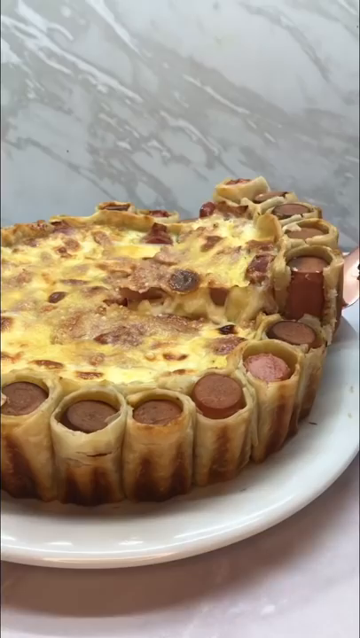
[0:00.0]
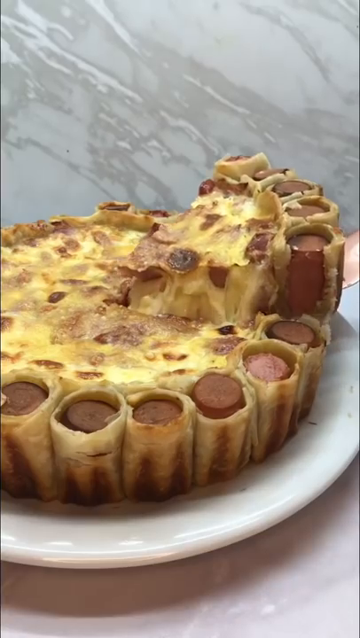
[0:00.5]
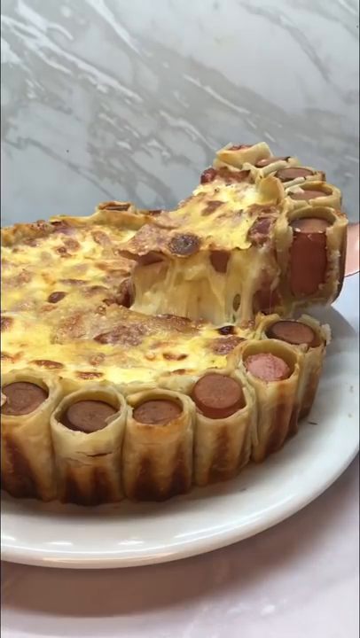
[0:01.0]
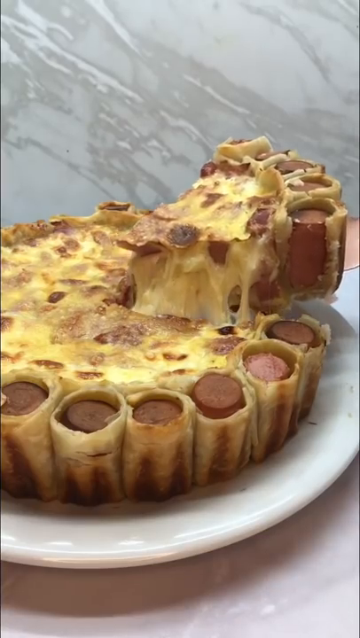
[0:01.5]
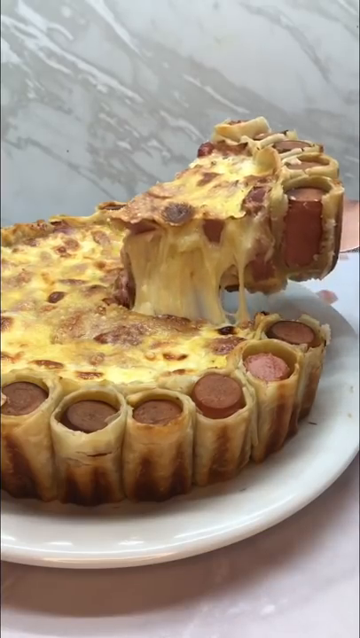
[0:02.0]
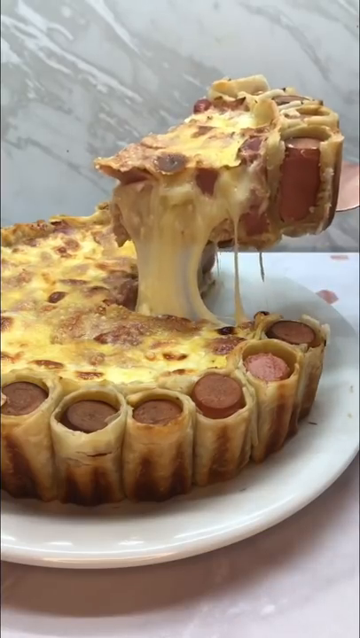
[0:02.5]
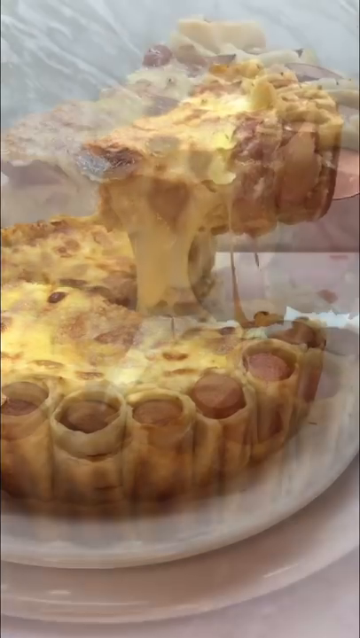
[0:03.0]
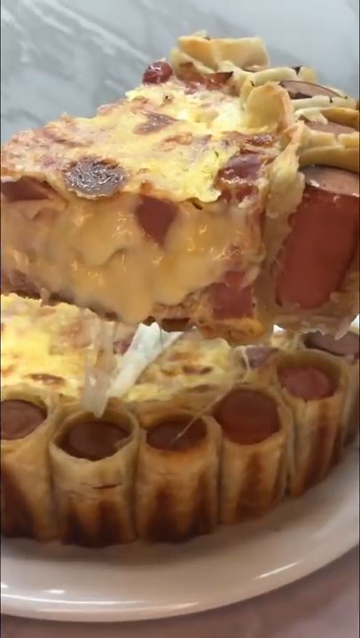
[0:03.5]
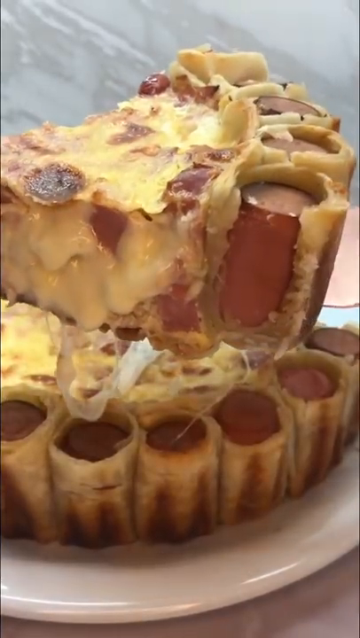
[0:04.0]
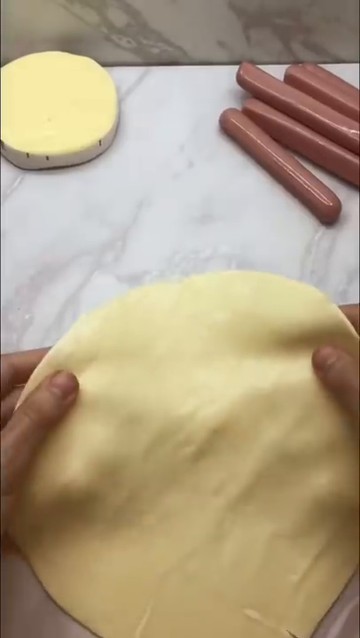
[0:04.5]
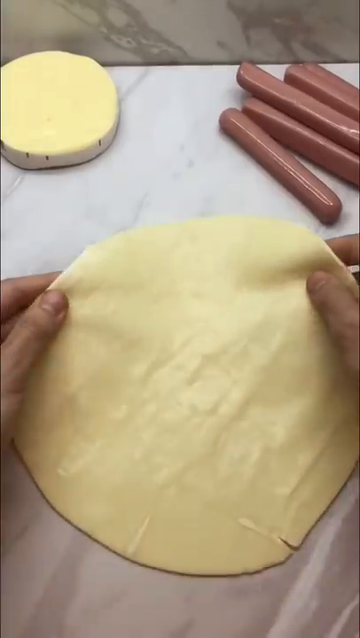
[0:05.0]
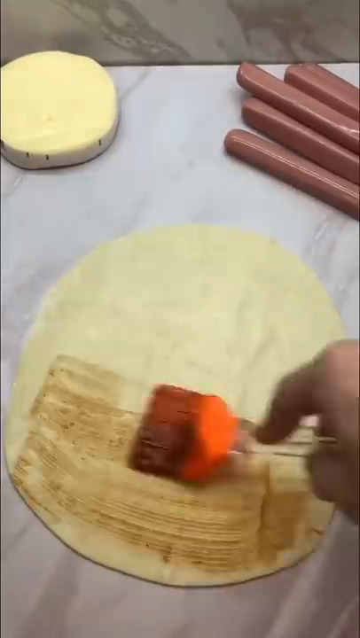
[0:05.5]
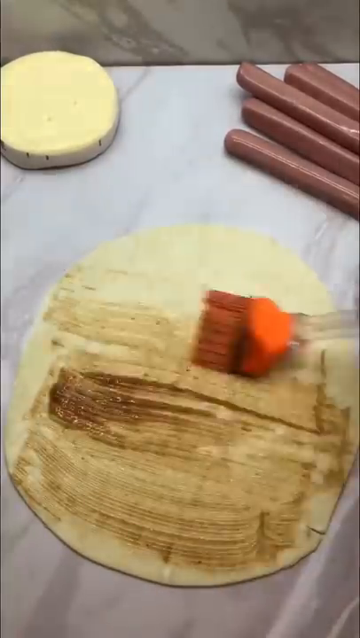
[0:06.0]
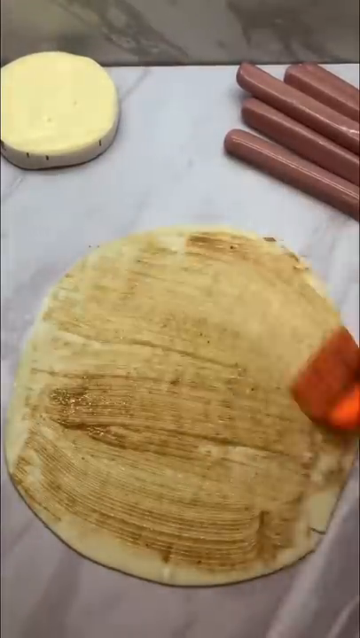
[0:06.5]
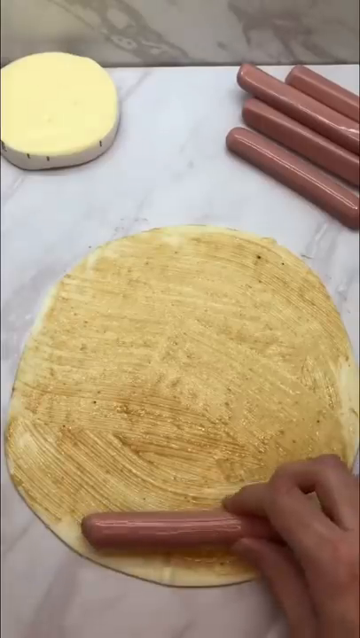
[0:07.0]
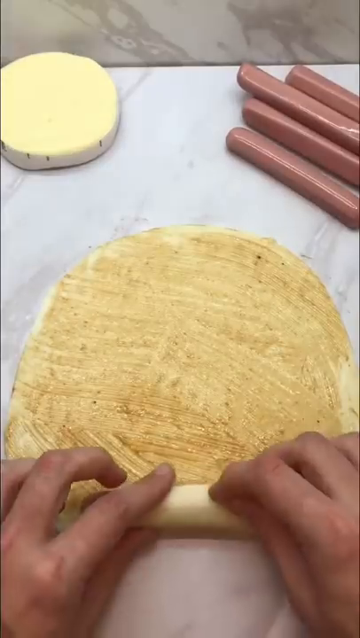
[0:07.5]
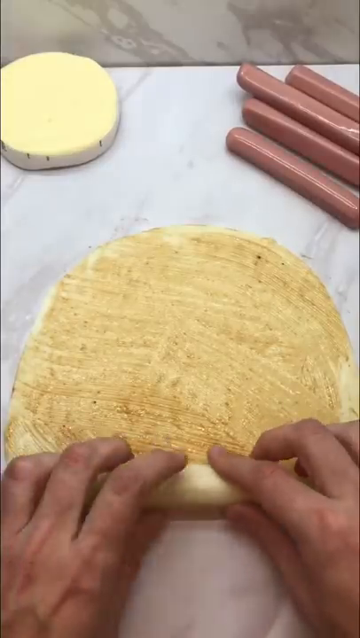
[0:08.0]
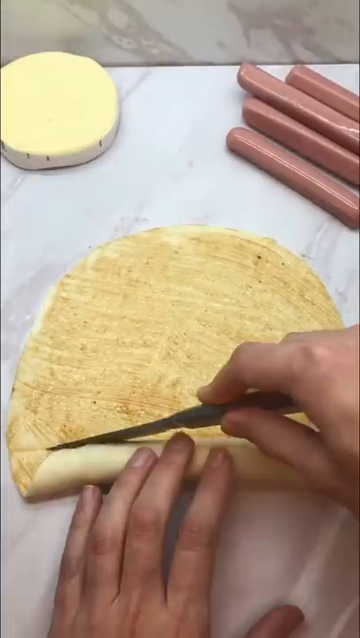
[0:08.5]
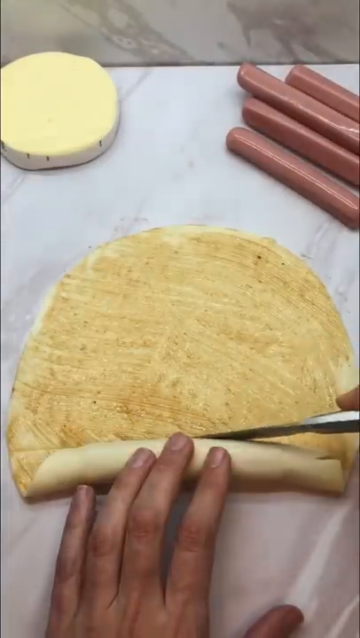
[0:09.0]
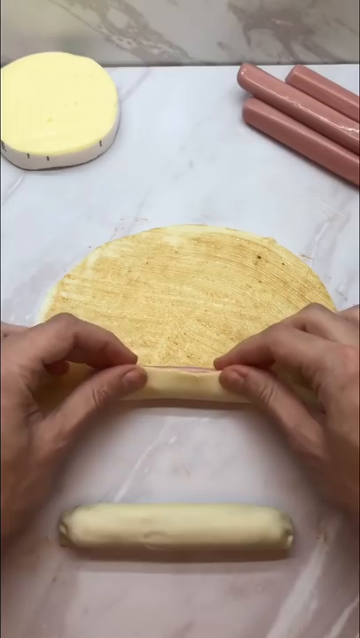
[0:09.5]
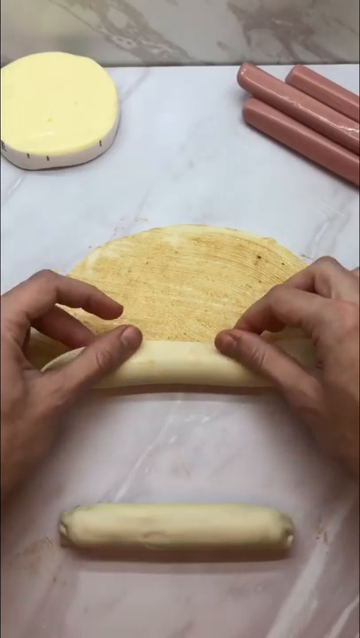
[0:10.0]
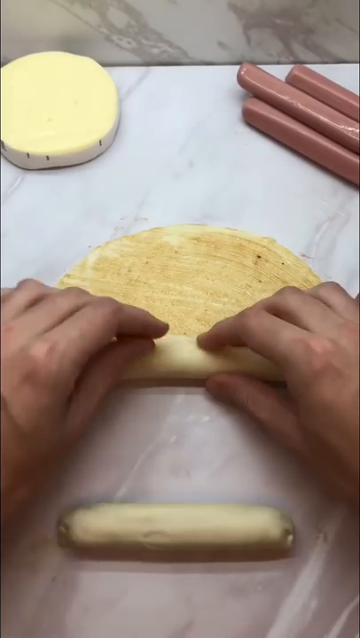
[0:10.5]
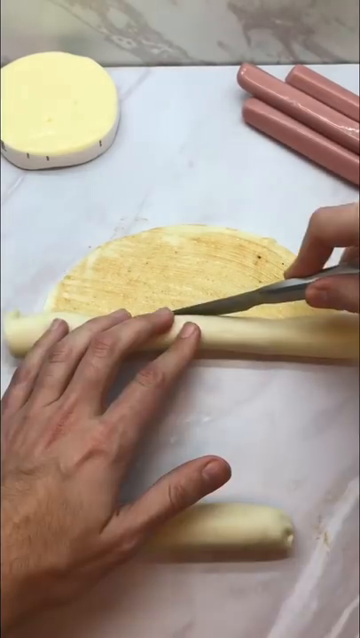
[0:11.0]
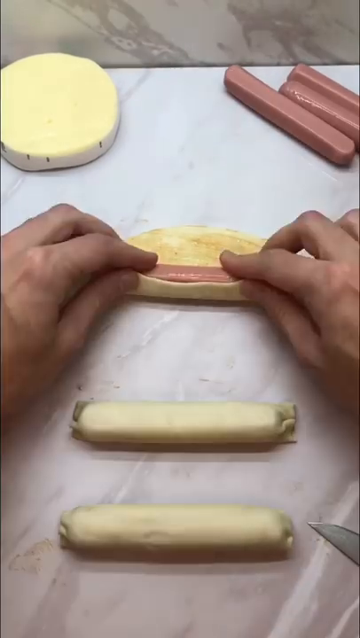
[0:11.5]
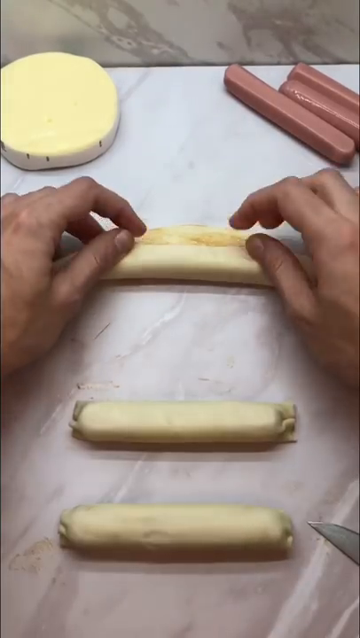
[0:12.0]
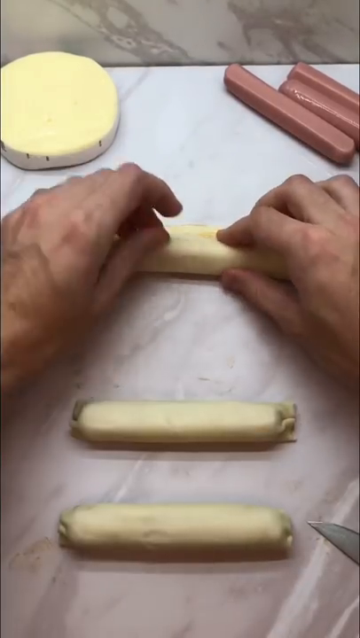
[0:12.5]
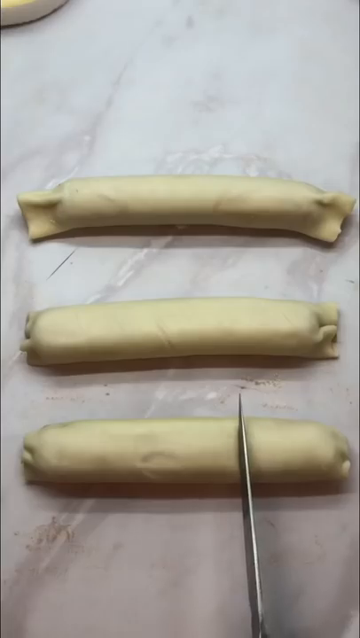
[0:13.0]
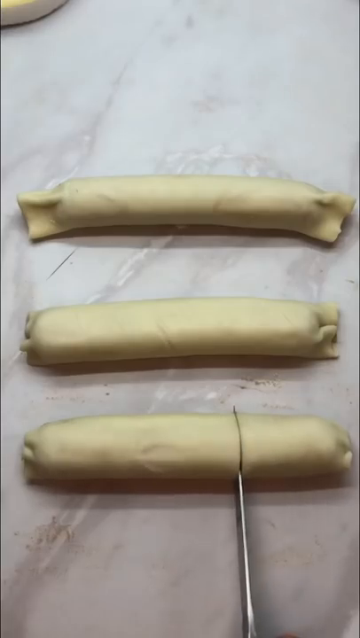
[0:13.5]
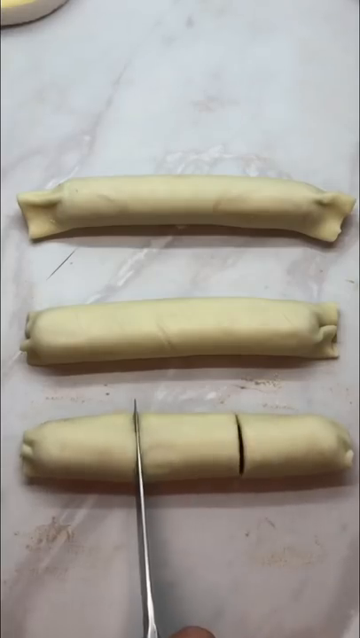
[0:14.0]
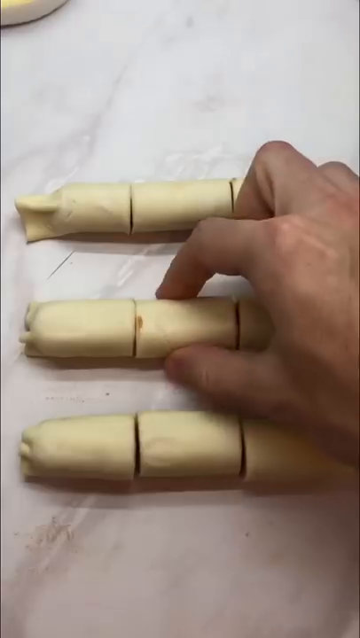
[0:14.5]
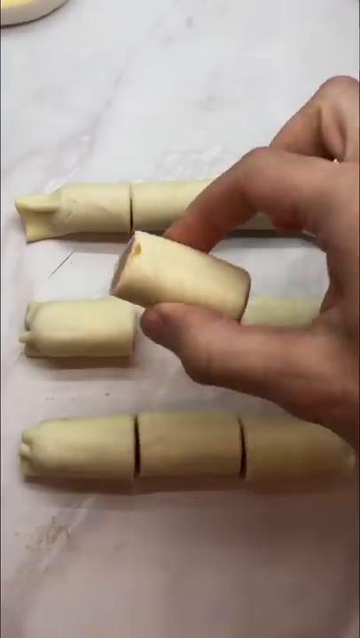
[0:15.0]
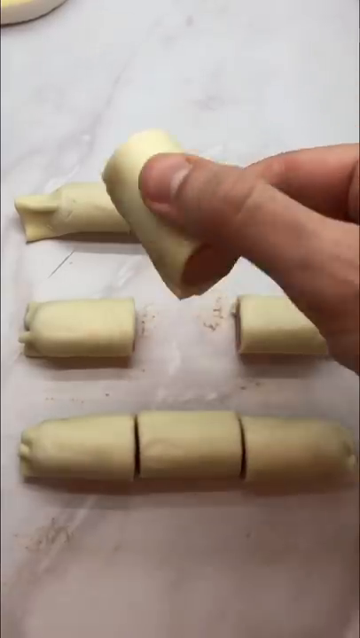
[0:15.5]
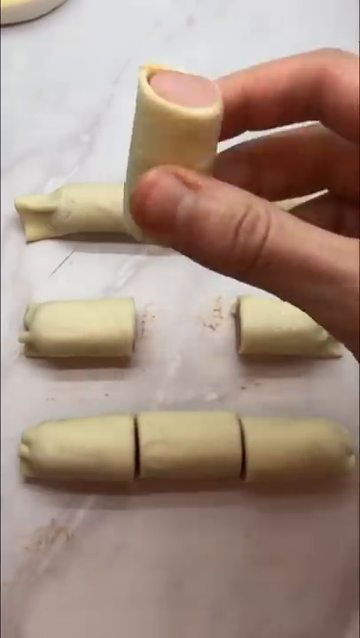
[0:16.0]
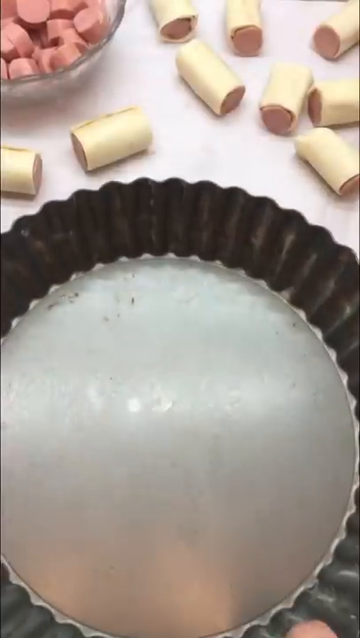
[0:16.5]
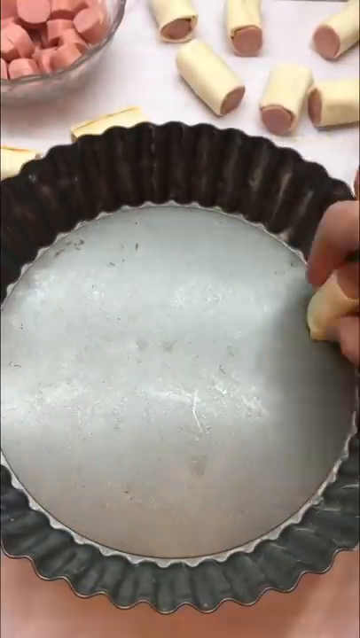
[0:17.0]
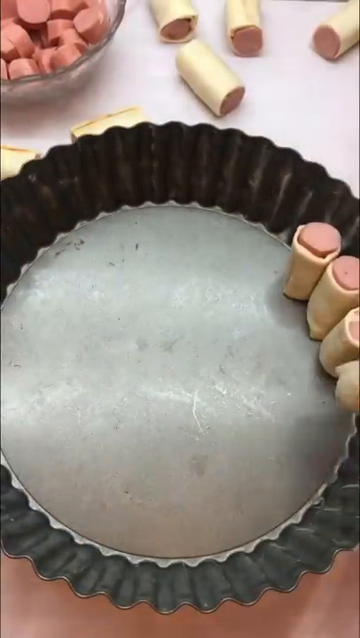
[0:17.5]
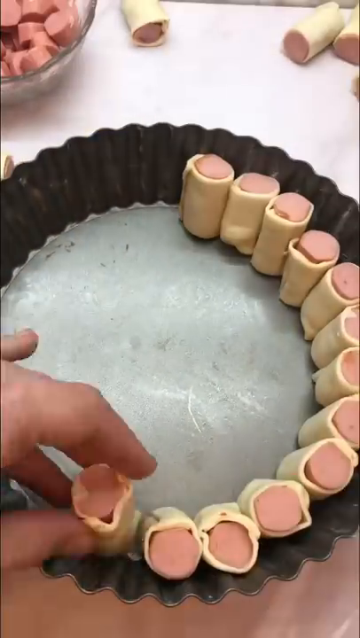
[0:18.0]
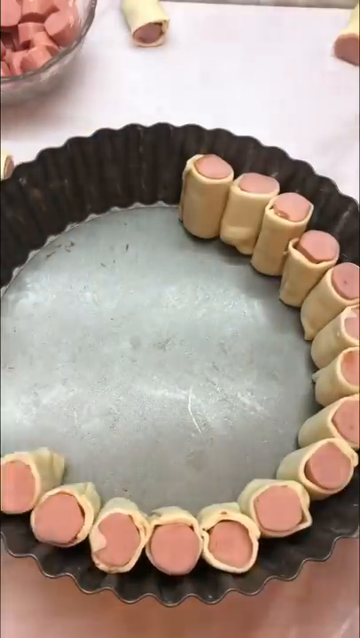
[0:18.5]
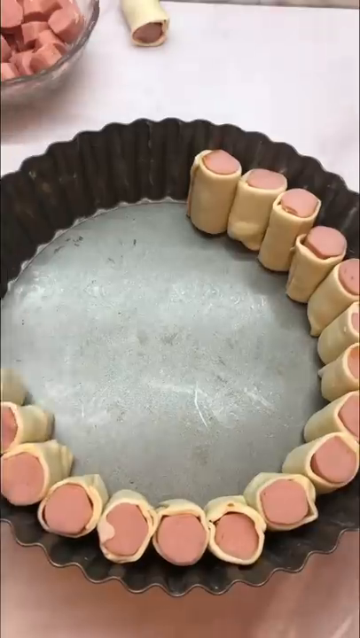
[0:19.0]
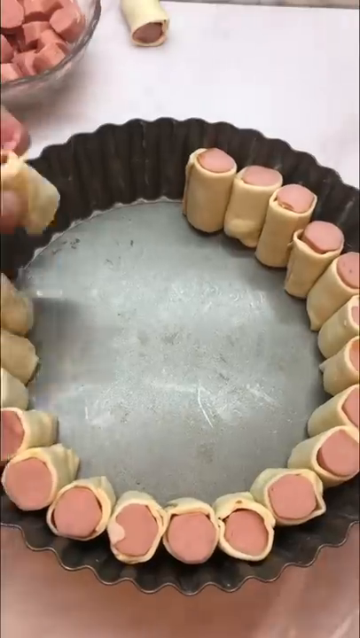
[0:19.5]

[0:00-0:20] The video shows the start of a recipe that uses dough and hot dogs; the only person visible is a pair of hands. It opens with a close-up of the final product, which looks almost like a pie. The hands roll out the dough and use a brush to put some kind of liquid coating on top of it. They then put the hot dogs into the dough and cut the dough around them, kind of like pigs in a blanket, roll them together, and cut the hot dogs into what look like thirds. The dough-wrapped hot dog pieces are arranged in a pan, all on the outside near the edges of the pan, with their tops visible.